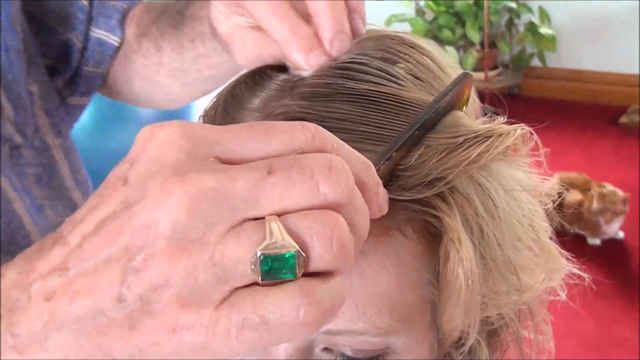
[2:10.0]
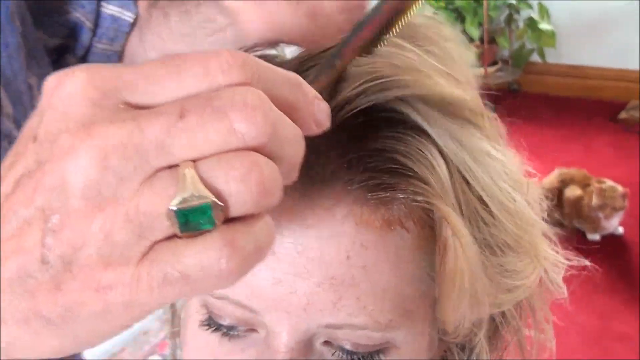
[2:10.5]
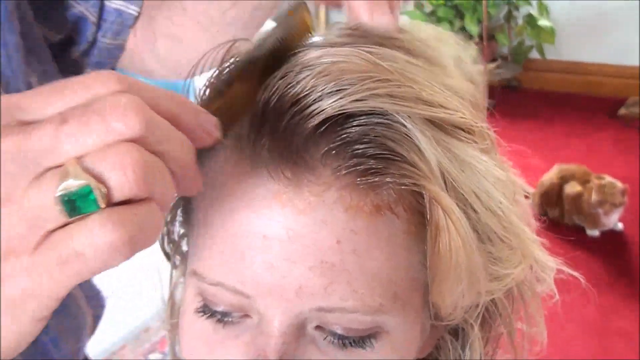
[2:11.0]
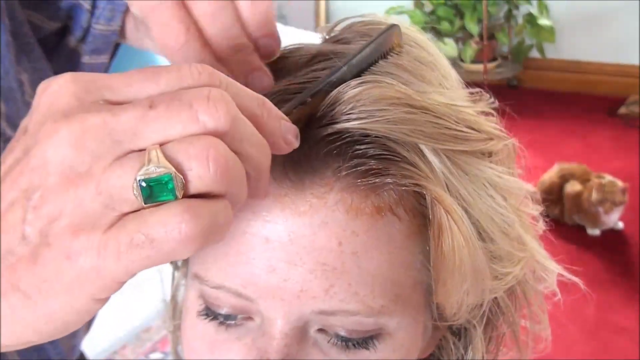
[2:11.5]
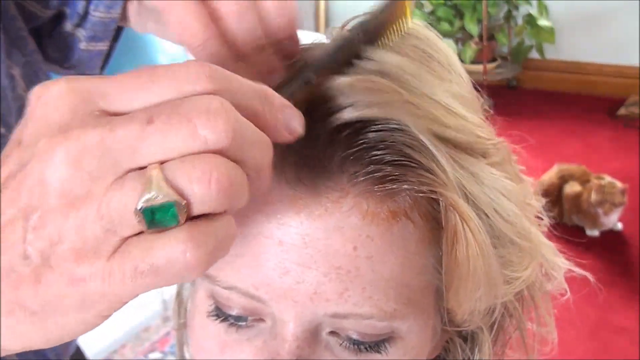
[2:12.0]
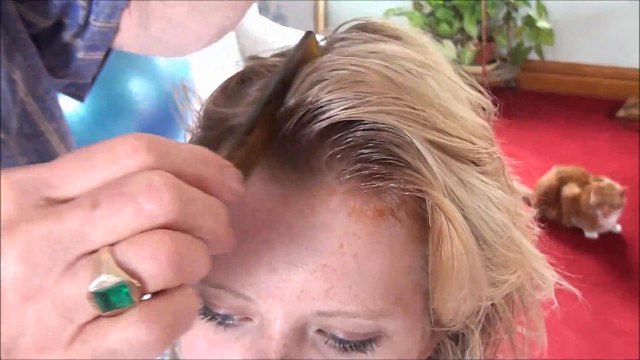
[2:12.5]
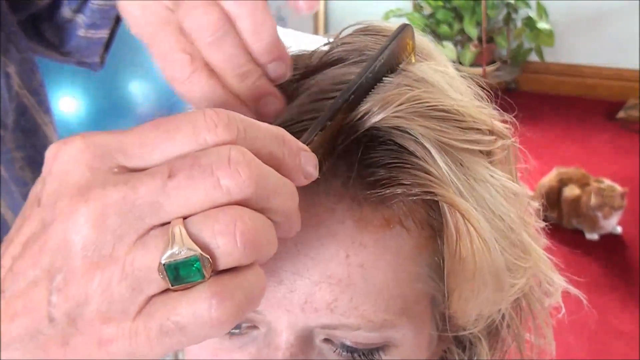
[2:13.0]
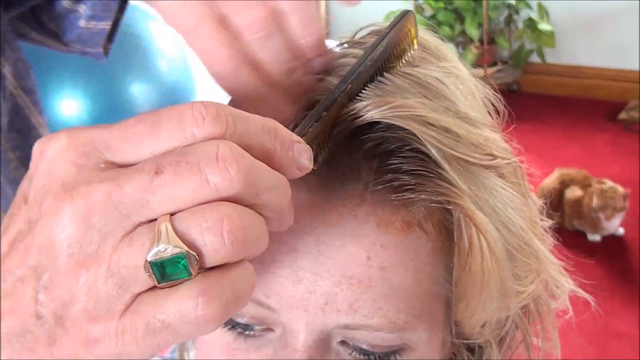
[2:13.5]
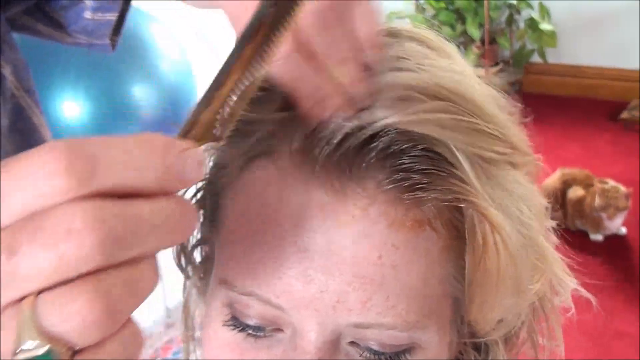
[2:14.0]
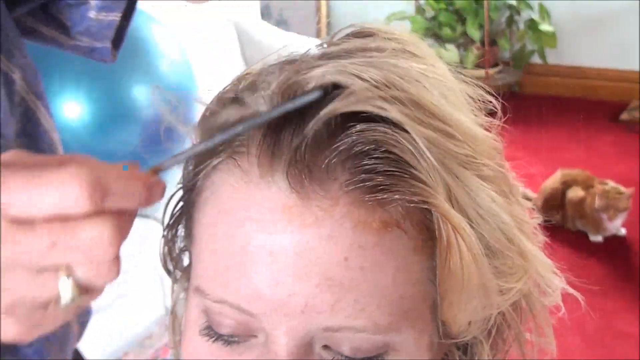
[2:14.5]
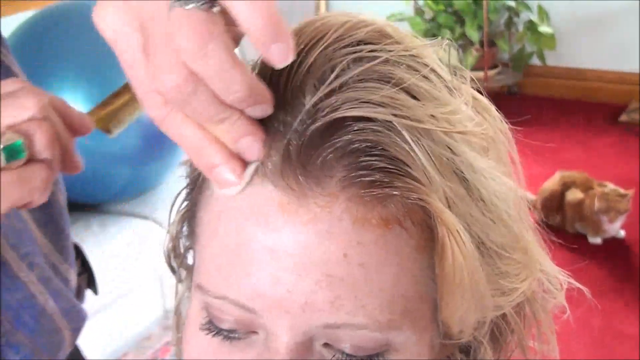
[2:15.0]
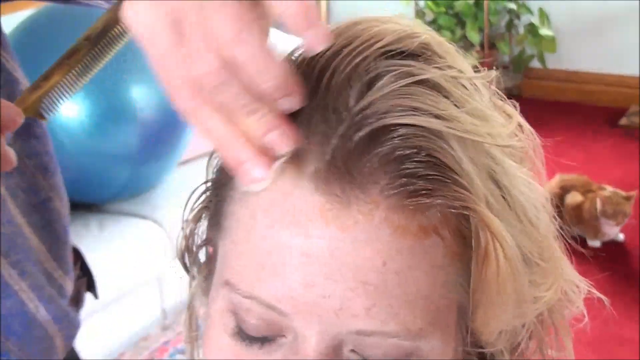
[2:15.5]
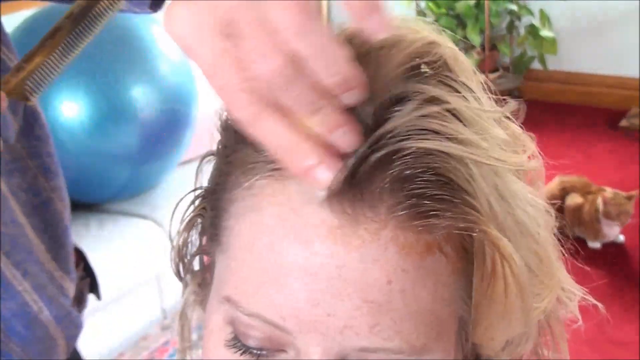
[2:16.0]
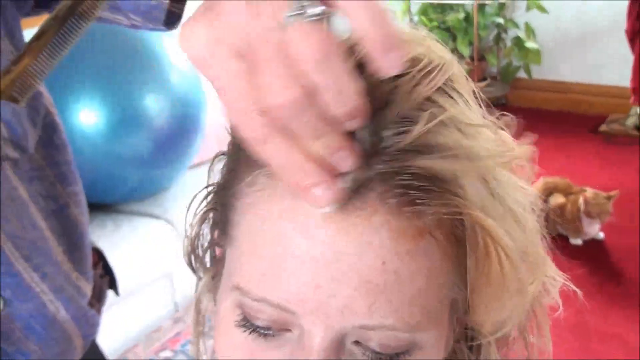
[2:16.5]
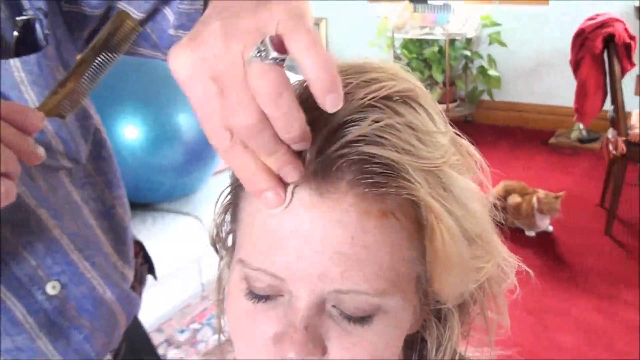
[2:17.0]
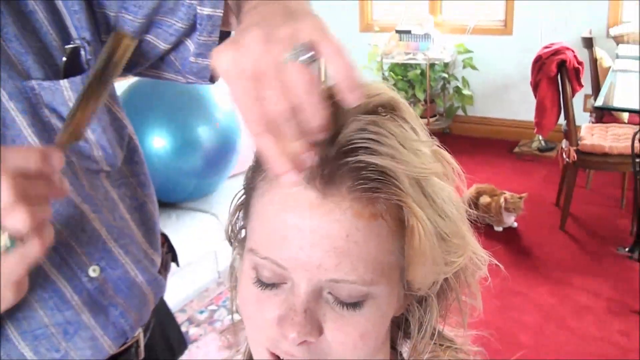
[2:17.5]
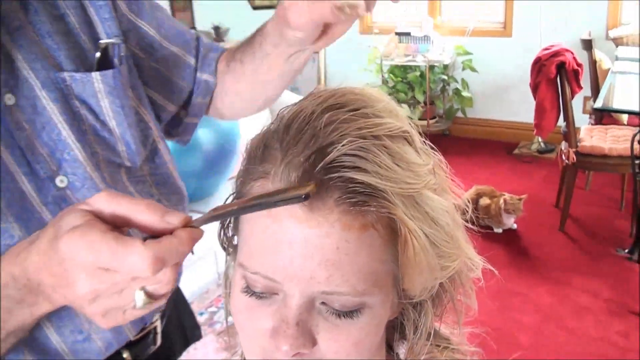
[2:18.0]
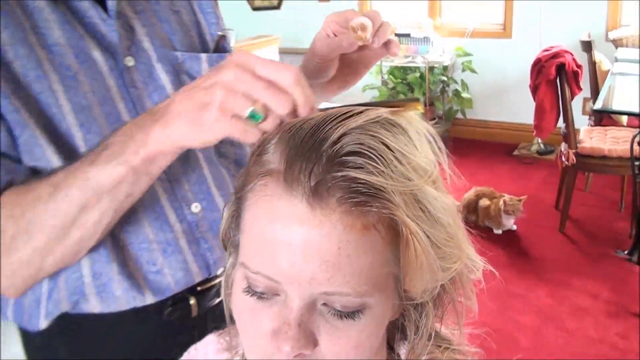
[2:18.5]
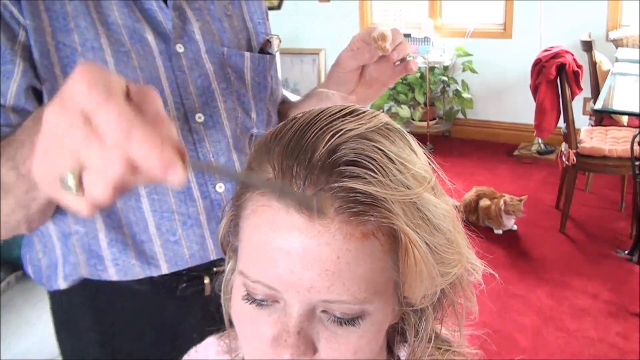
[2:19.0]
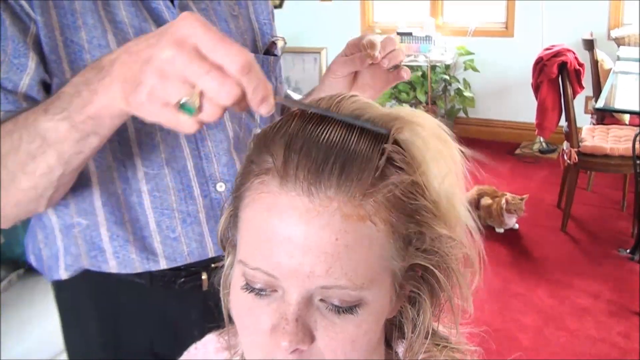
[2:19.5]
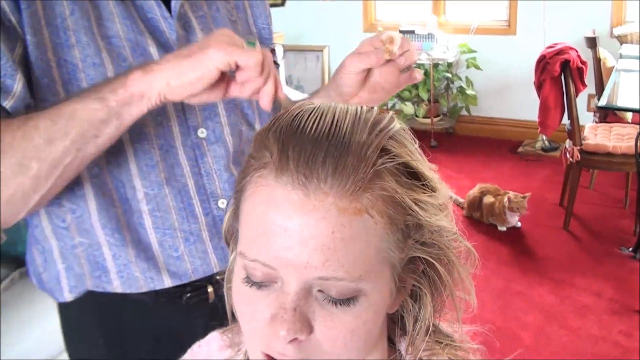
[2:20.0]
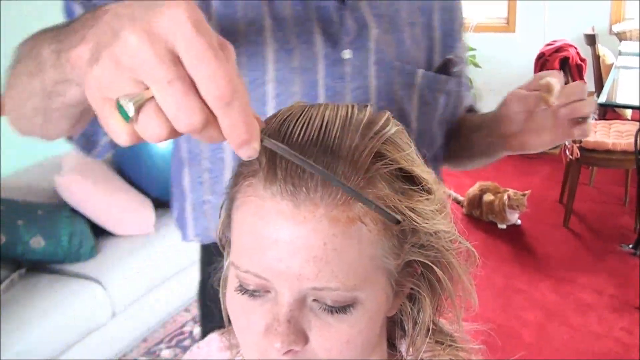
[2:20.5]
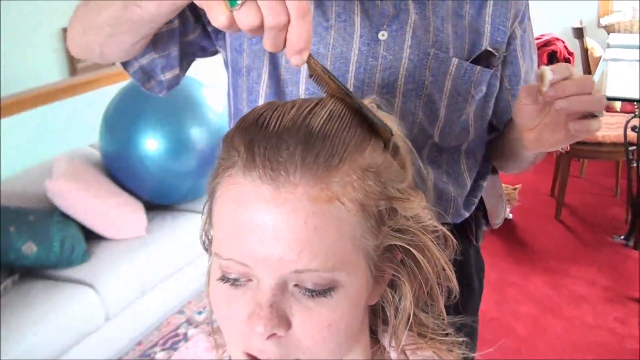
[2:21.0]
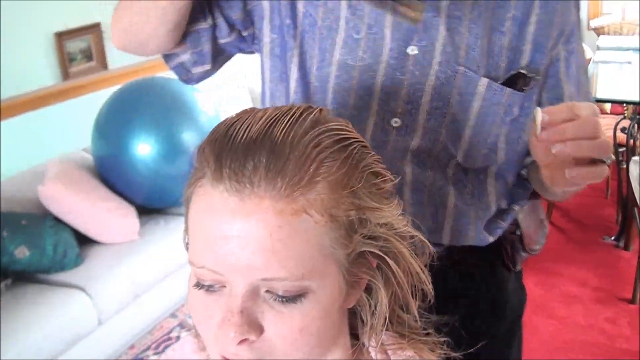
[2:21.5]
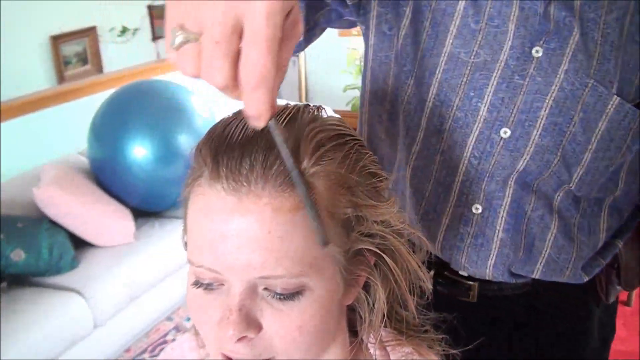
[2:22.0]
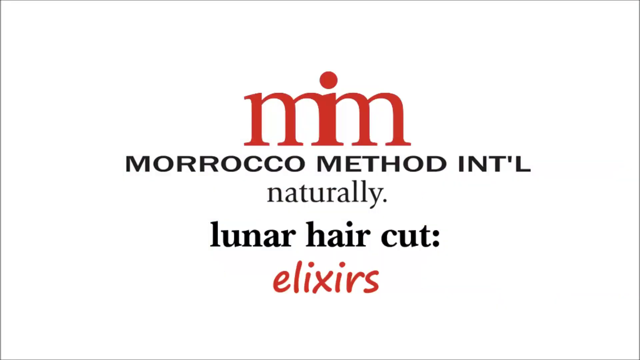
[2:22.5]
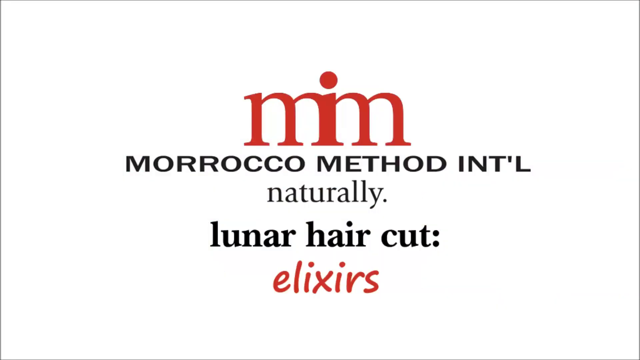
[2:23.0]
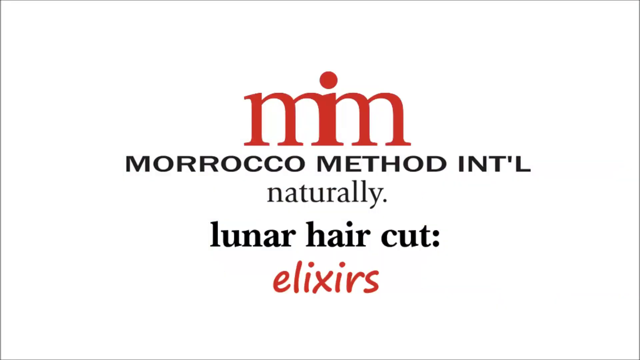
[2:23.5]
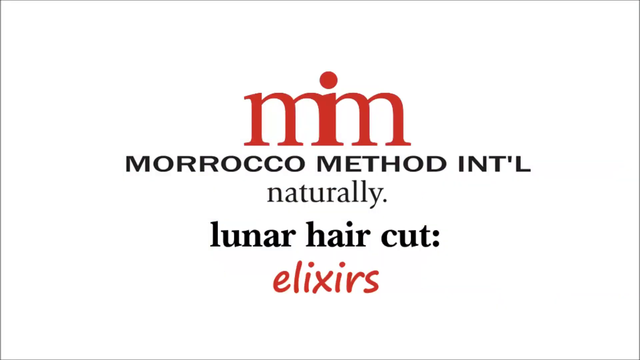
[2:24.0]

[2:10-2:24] The top of someone's head is shown with hands in the hair. The right hand holds what appears to be a brown and tan multicolored rat tail comb and wears a gold-colored ring on the ring finger that appears to have an emerald stone. The left hand holds something. In the background is what appears to be an orange tabby cat, and a plant that appears to be a fern sitting on a small table. The comb parts the hair and a cotton ball is rubbed on it. The camera pulls out, showing the stylist wearing a blue striped shirt with sunglasses in his pocket. In the background is a blue ball on a couch that appears to be white or cream, with a tan pillow and a green pillow. There is a half wall in the background with a photo sitting on it, behind the couch. A glass table and two chairs that appear to be wooden are in the background; one chair has a pink cushion on the seat and a red jacket across the back, and the second has a light-colored pillow on the back. The video ends on a text screen reading "Morocco Method International," "naturally," "lunar haircut service."